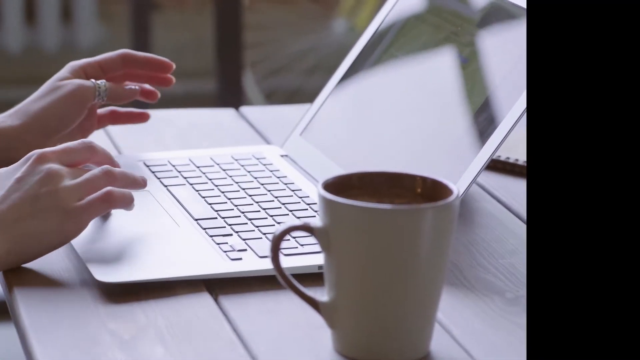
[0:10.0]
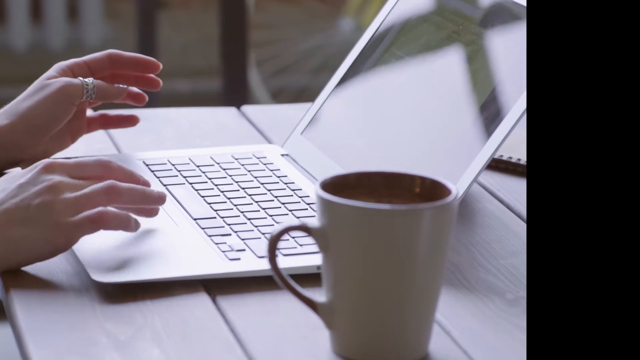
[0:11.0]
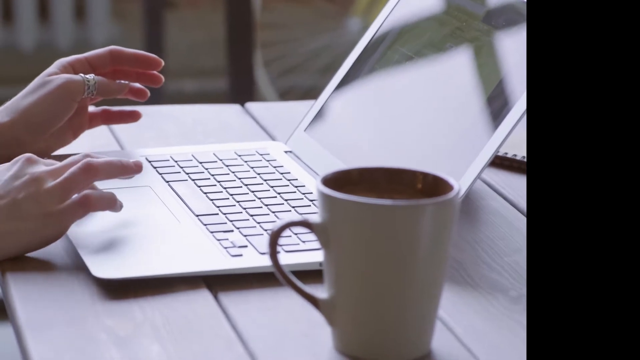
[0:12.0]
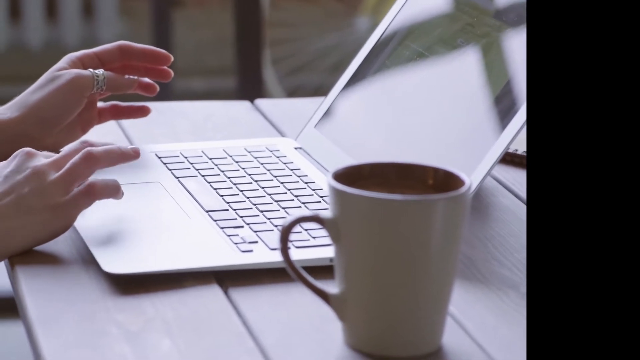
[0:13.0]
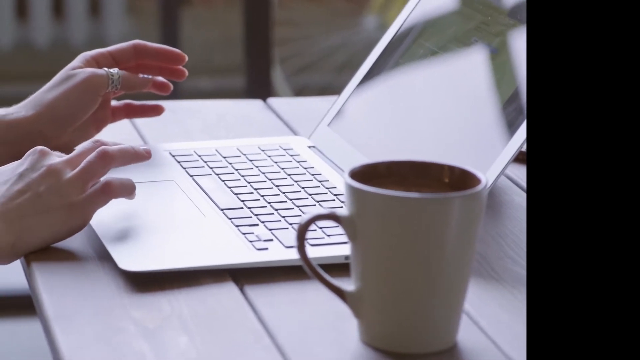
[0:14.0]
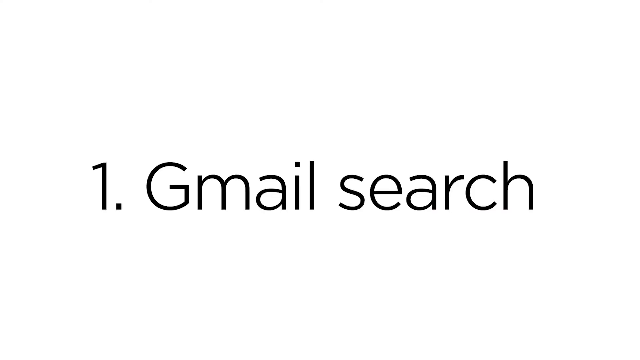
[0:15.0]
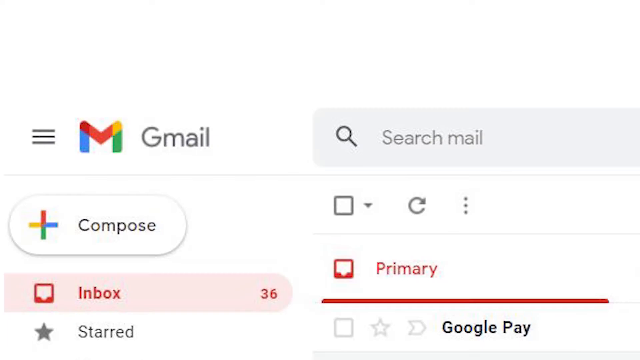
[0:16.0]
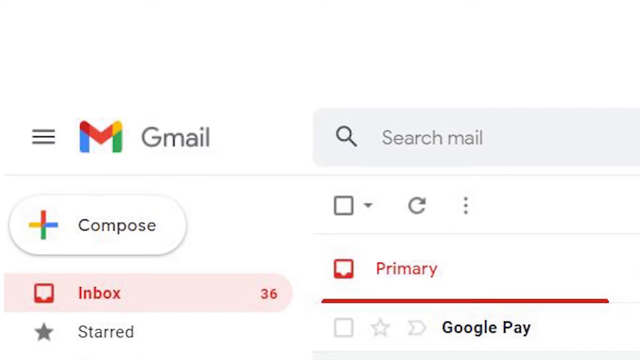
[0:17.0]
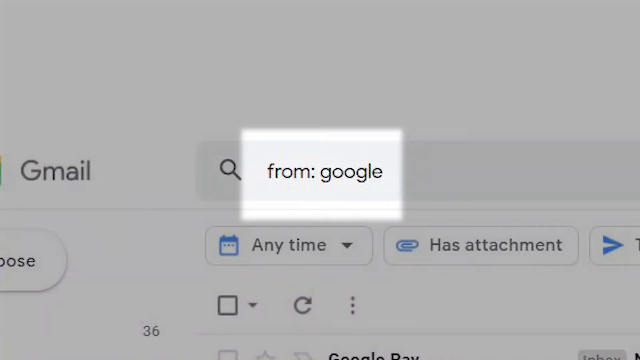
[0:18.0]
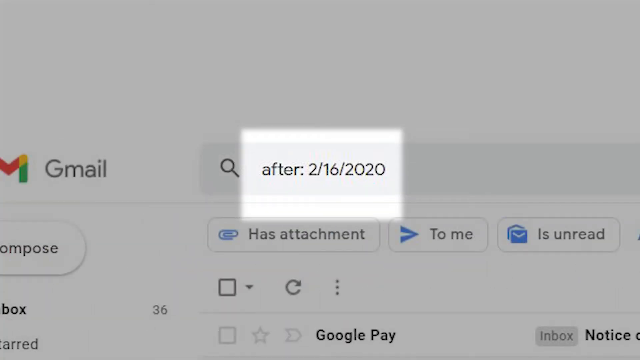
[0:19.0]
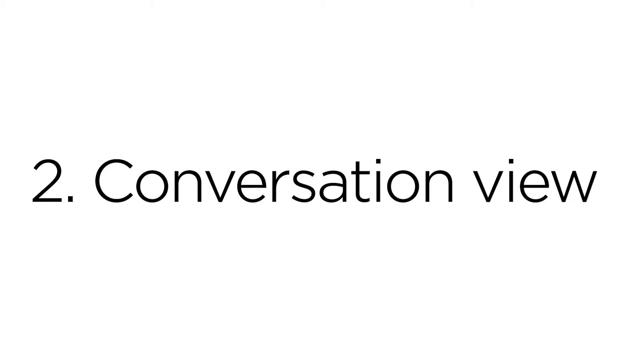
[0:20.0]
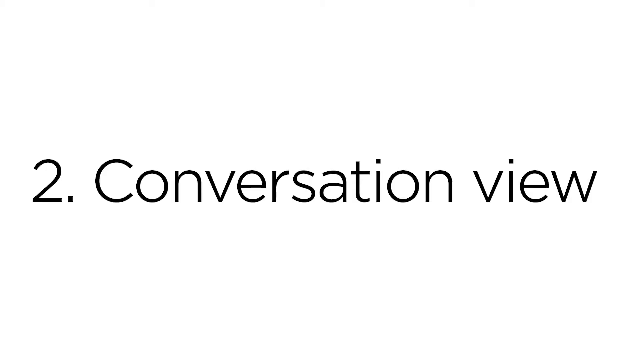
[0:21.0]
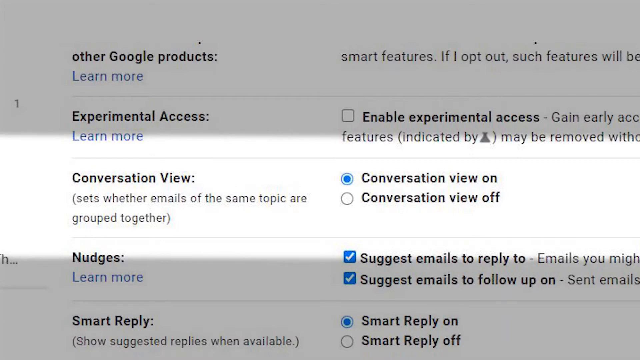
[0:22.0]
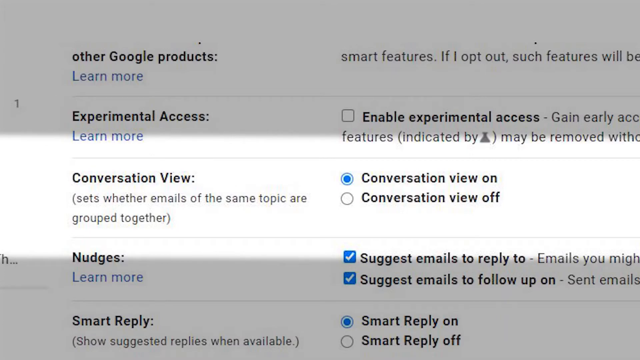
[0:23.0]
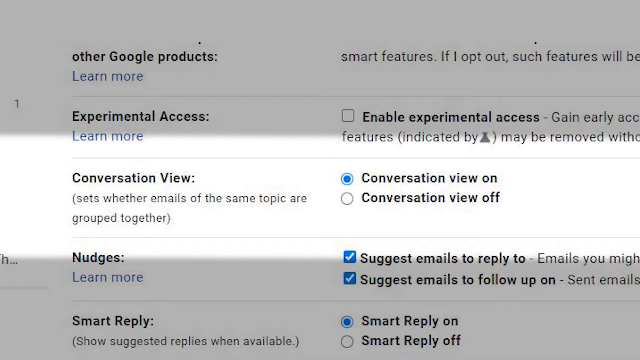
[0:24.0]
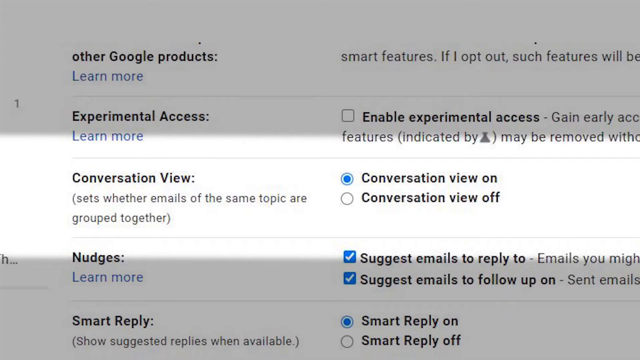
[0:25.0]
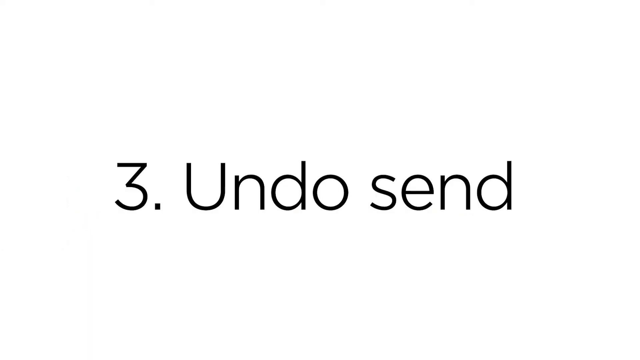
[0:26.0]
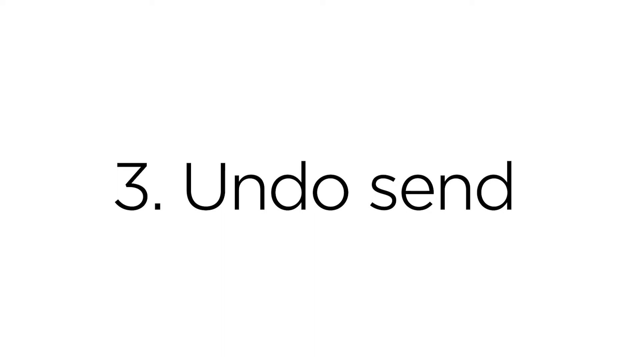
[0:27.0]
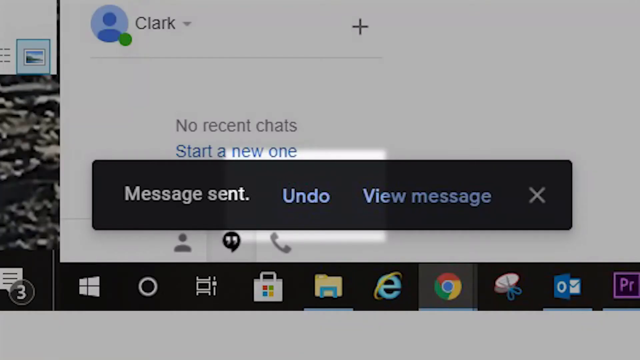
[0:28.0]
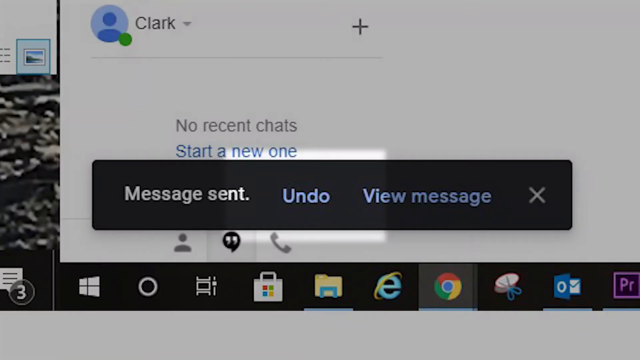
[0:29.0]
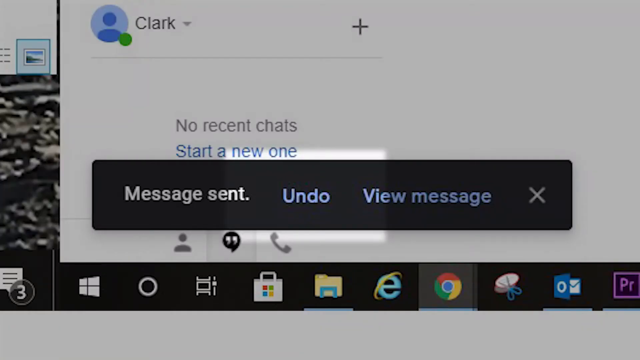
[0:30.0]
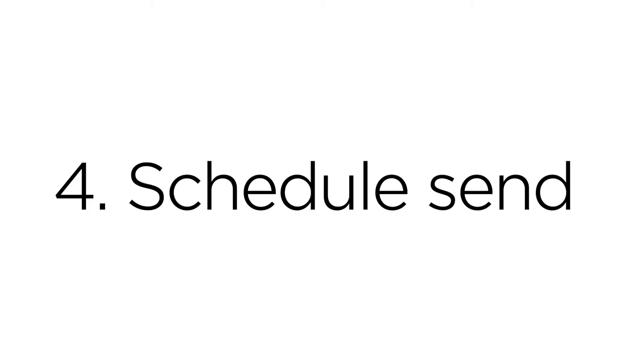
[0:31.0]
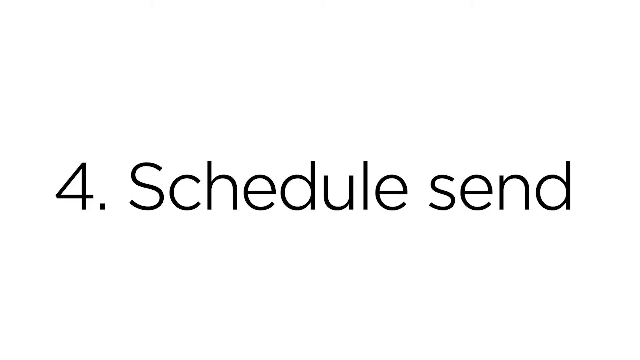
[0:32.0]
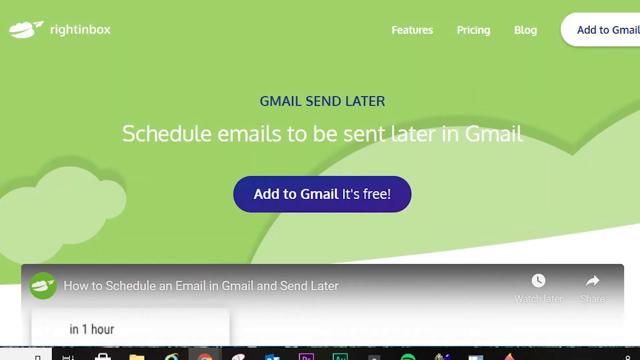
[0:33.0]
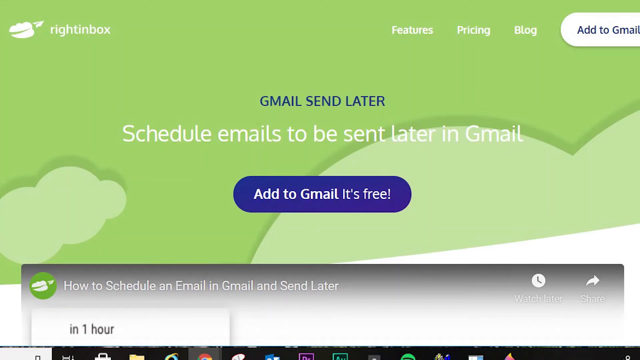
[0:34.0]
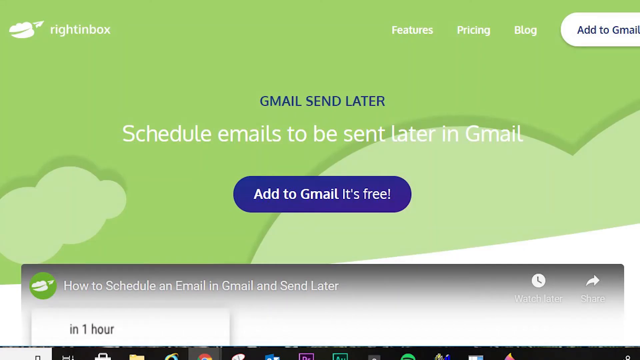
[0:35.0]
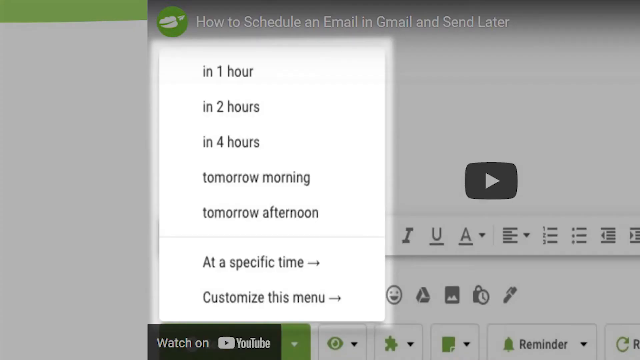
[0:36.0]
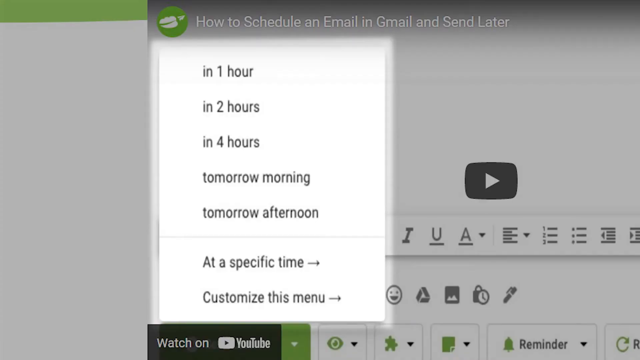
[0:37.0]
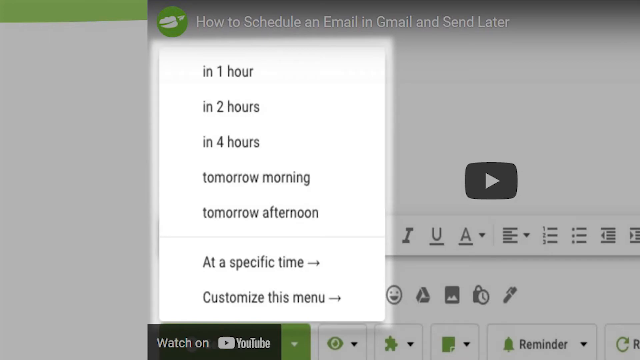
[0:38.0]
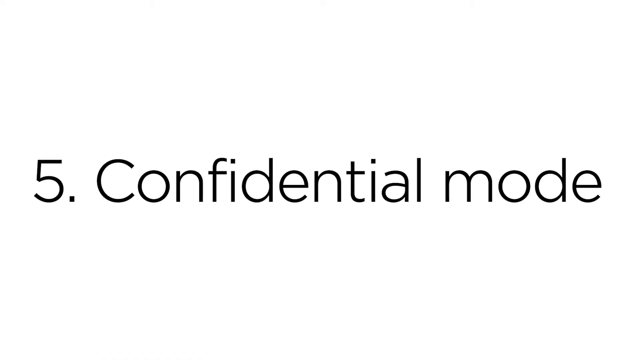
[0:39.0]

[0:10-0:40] The woman moves the trackpad with her right finger. The screen then turns white with the number 1 and "Gmail search" on it. It quickly changes to an image of the Gmail application on a computer, zoomed in on the top left corner, showing Gmail, Inbox, Compose and search mail. Another screen shows that the user has entered "from:Google" in the search bar and attached a filter for after a certain date. The screen zooms in on these searches, and a low-opacity black box covers the entire screen except for the words, which can be seen clearly, so the rest of the screen is slightly darkened. Next, a white background with black text reads "2 conversation view" before fading to the Gmail setting for conversation view, with on and off options; the user currently has it set to on. Another white screen then shows the number 3 and "undo send". It switches back to Gmail, showing a message sent notice in the bottom left corner of the screen with an undo button and a view message button. The undo button is clearly visible while the rest of the screen has a light, low-opacity black filter over it, making it less visible. A white background then reads "4 schedule send", followed by a website called Right Inbox with a green background and a design of clouds. The website is for scheduling emails to be sent later in Gmail and has an option to add it to Gmail. Options in the application follow, such as "in one hour" and "in two hours", plus a specific time that can be set for sending; these are shown normally while the rest of the screen has low-opacity black over it. Finally, the number 5 and "confidential mode" appear.